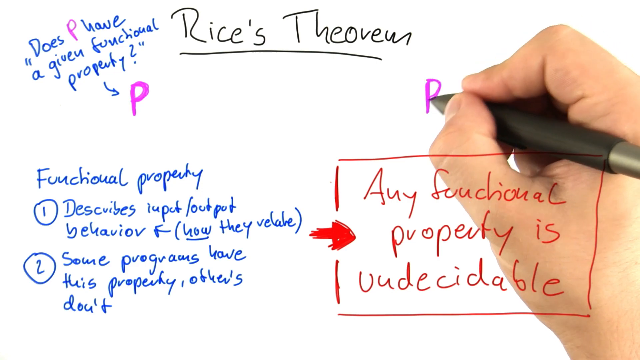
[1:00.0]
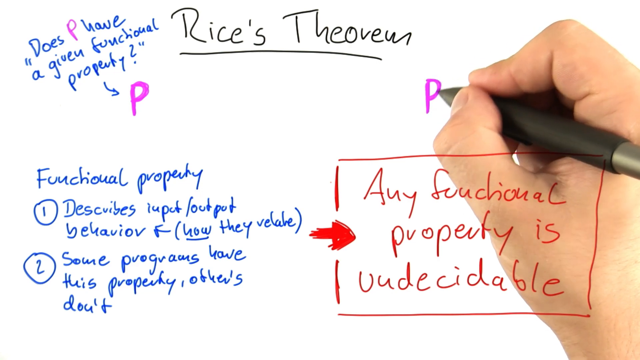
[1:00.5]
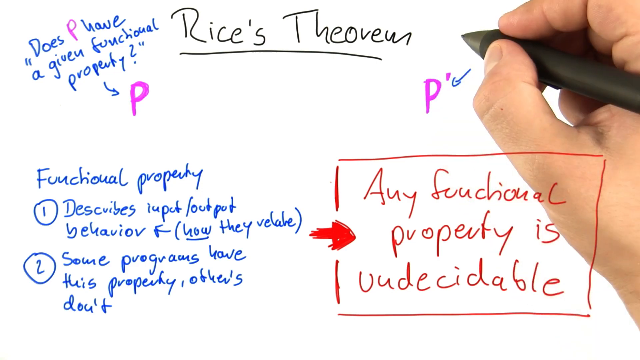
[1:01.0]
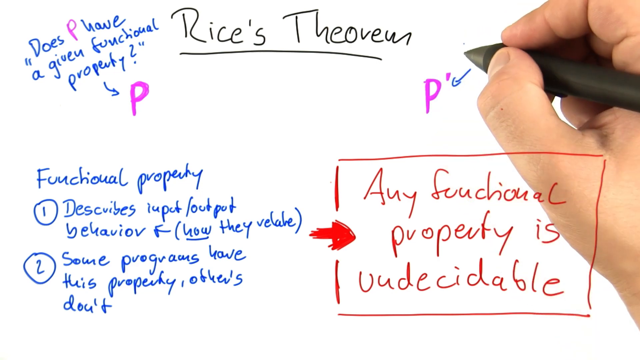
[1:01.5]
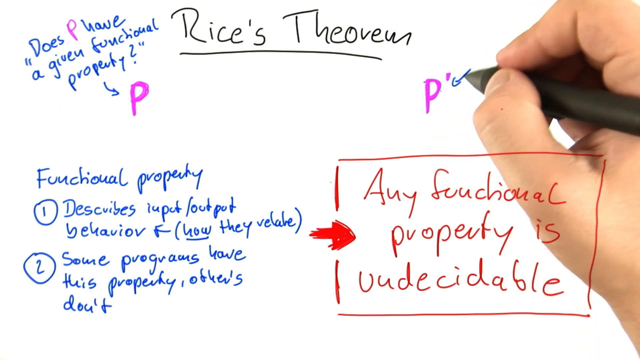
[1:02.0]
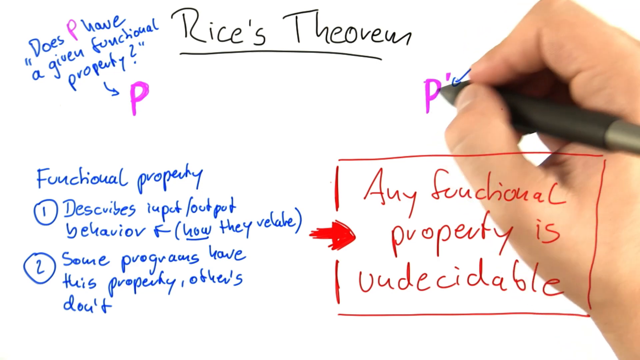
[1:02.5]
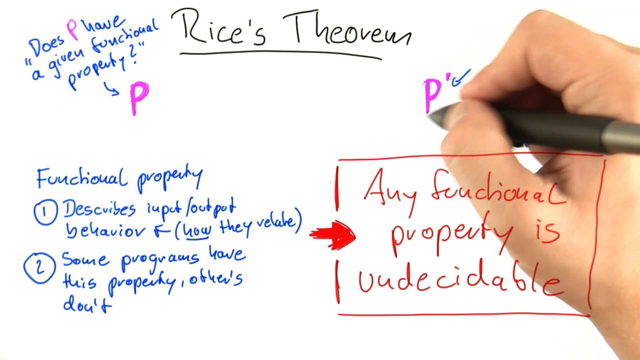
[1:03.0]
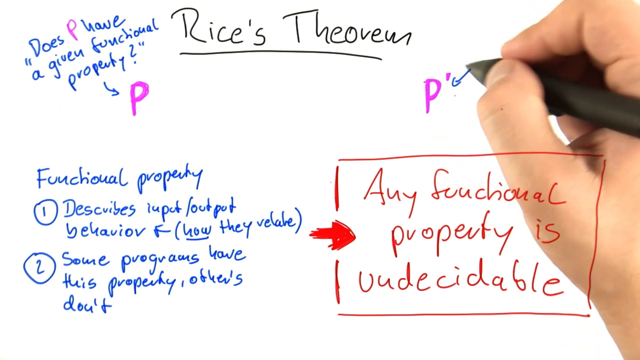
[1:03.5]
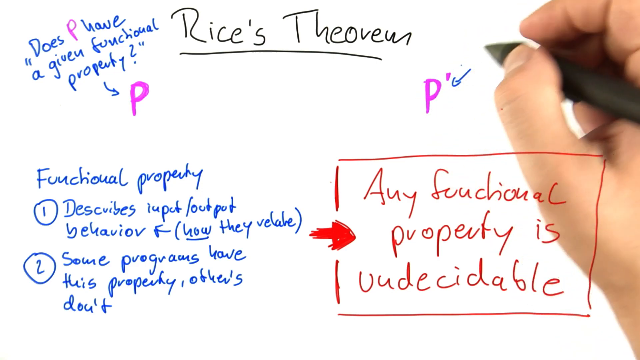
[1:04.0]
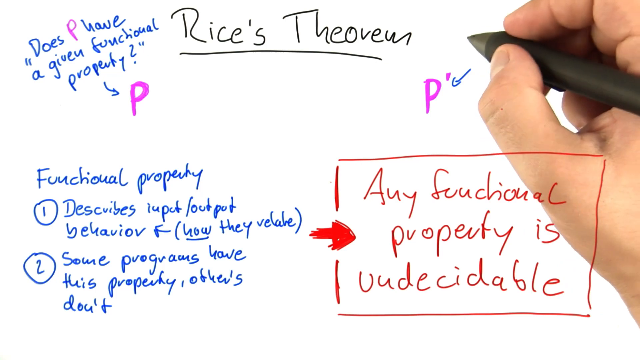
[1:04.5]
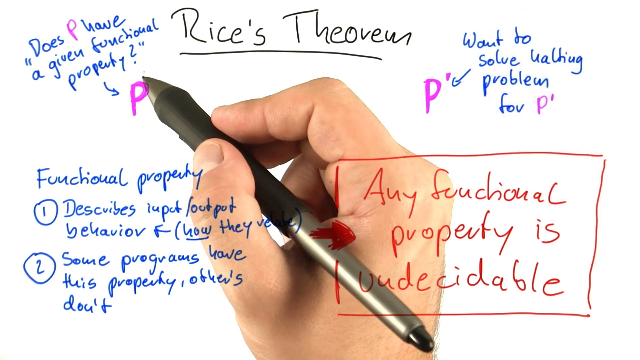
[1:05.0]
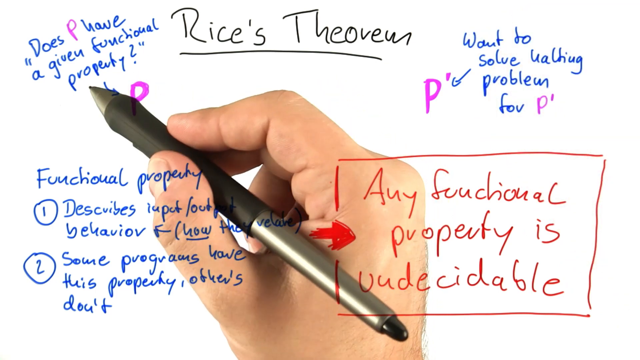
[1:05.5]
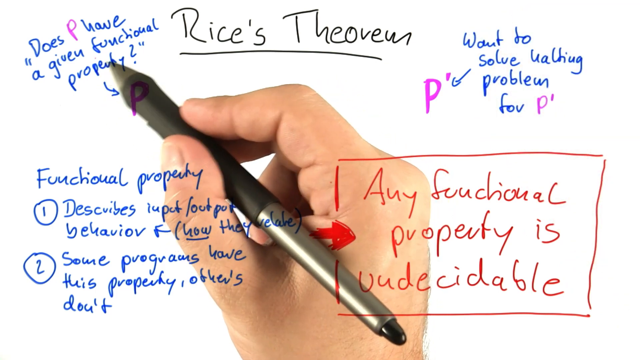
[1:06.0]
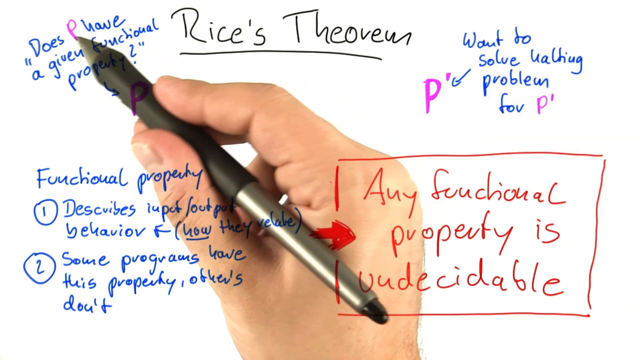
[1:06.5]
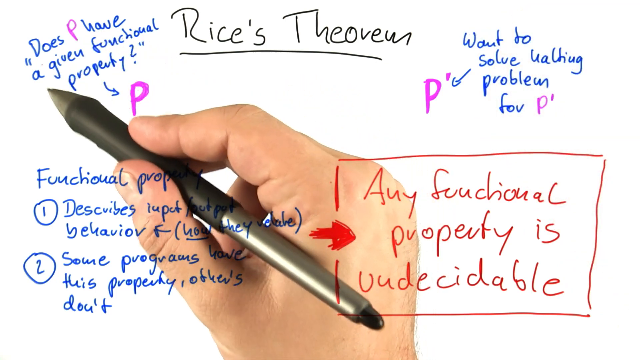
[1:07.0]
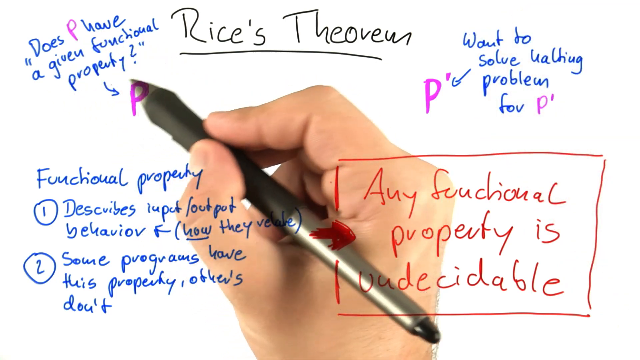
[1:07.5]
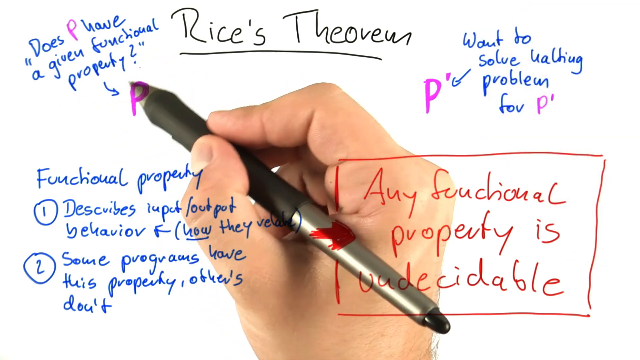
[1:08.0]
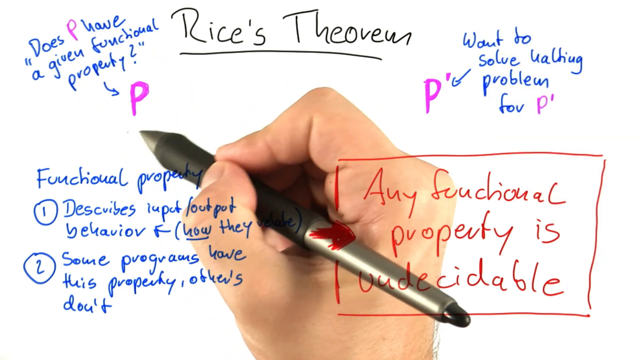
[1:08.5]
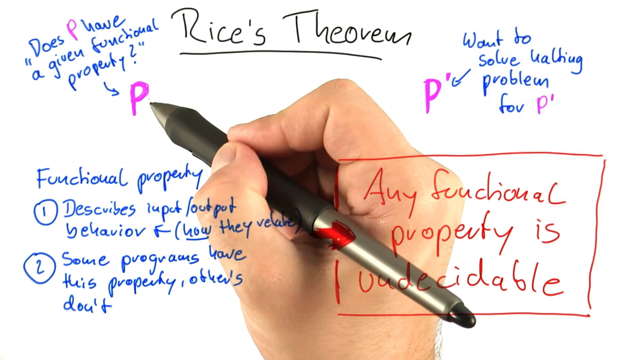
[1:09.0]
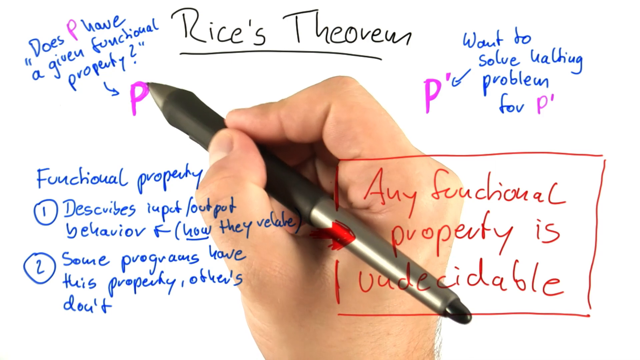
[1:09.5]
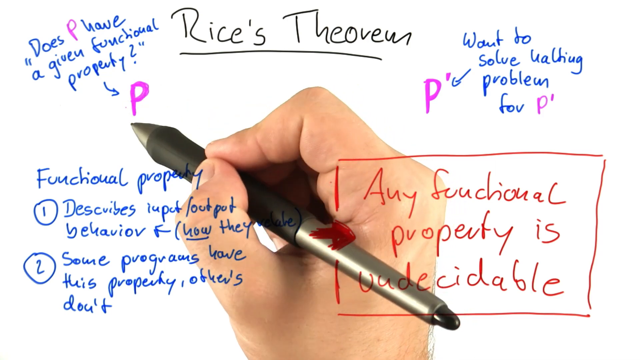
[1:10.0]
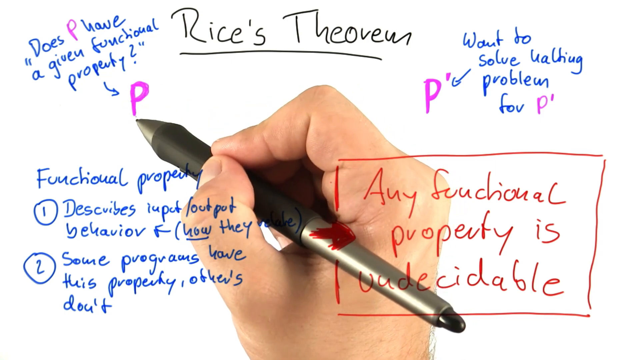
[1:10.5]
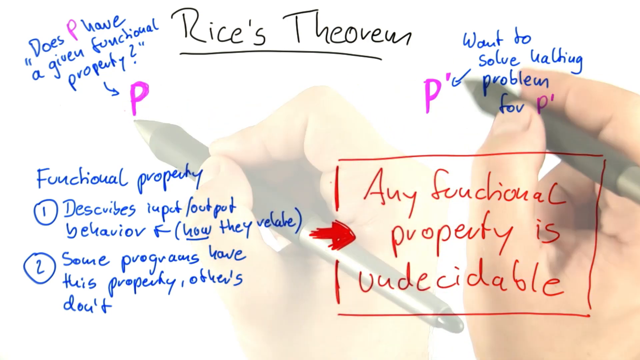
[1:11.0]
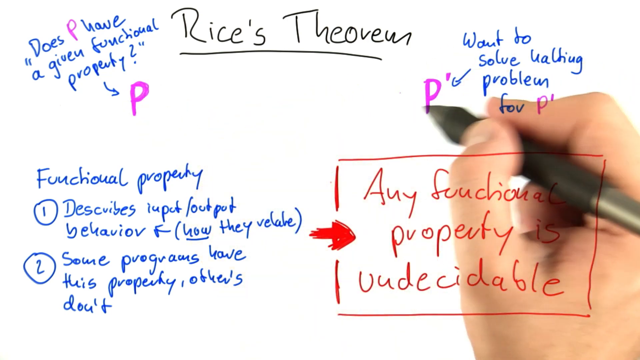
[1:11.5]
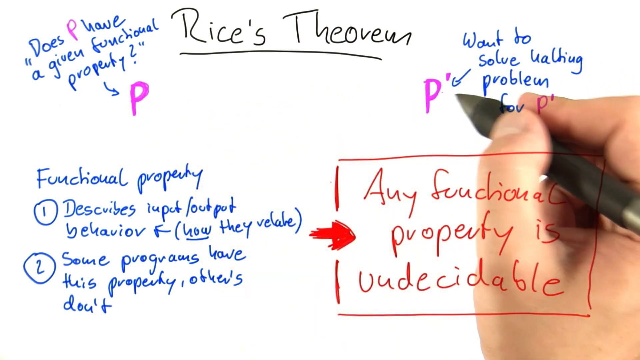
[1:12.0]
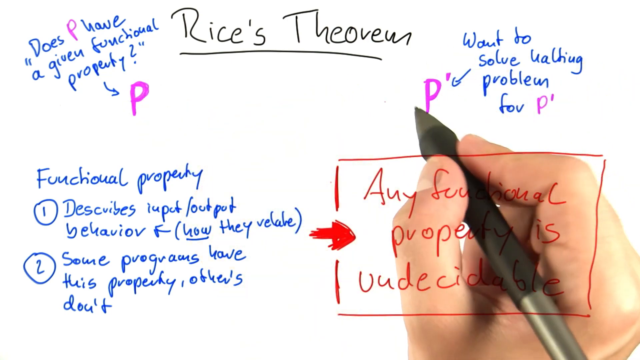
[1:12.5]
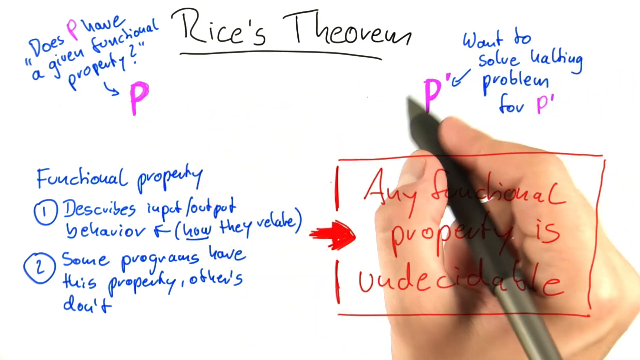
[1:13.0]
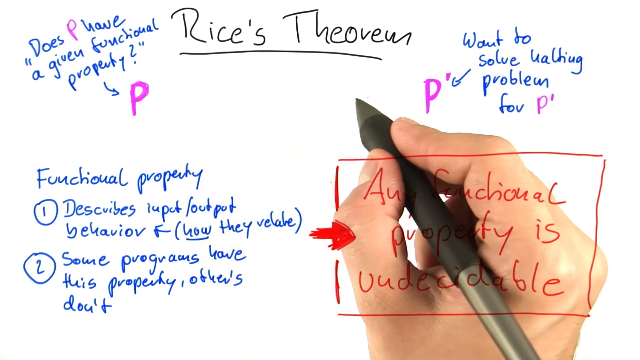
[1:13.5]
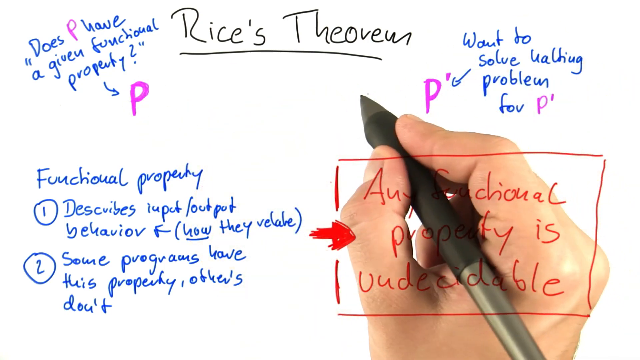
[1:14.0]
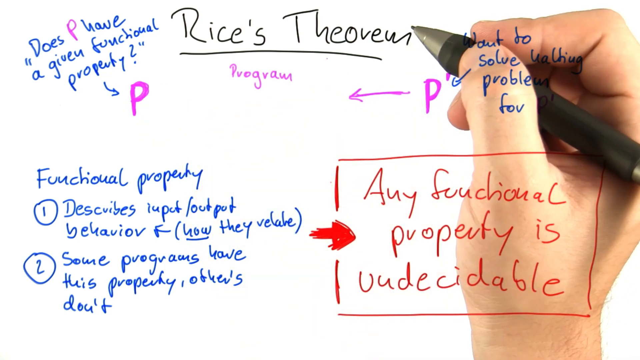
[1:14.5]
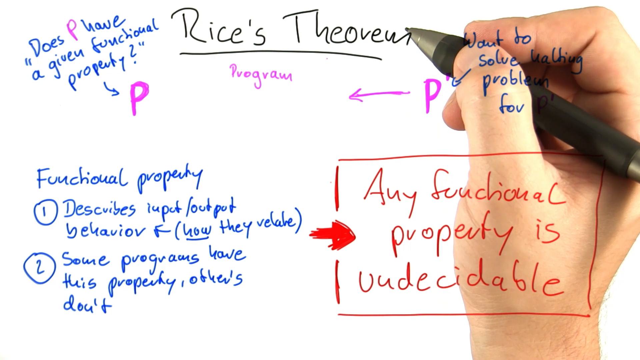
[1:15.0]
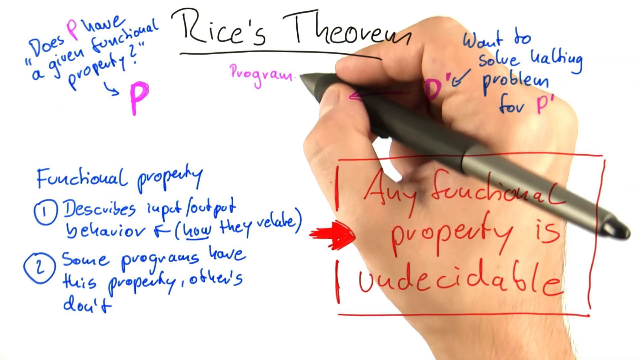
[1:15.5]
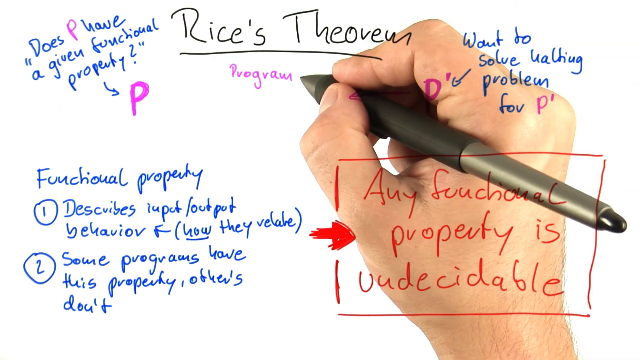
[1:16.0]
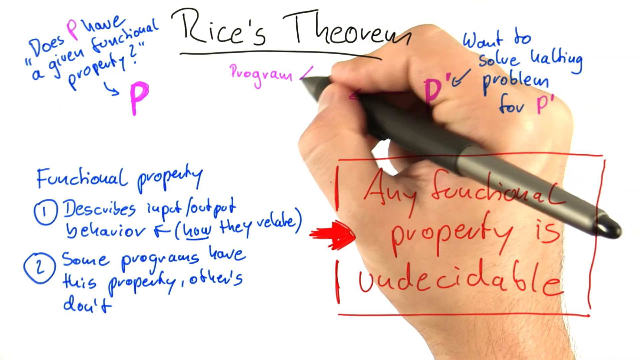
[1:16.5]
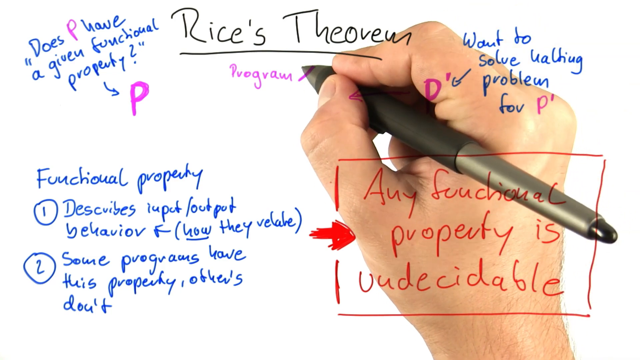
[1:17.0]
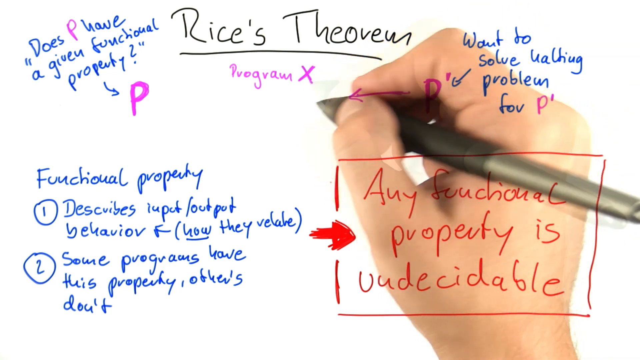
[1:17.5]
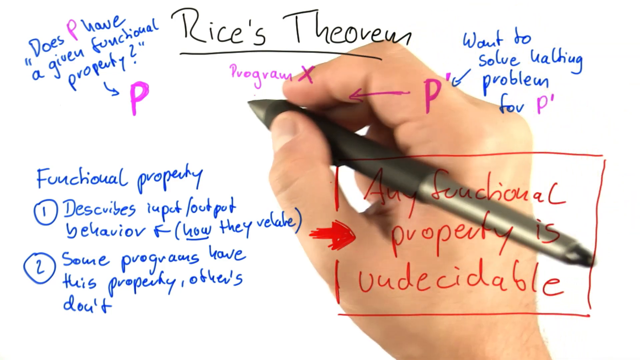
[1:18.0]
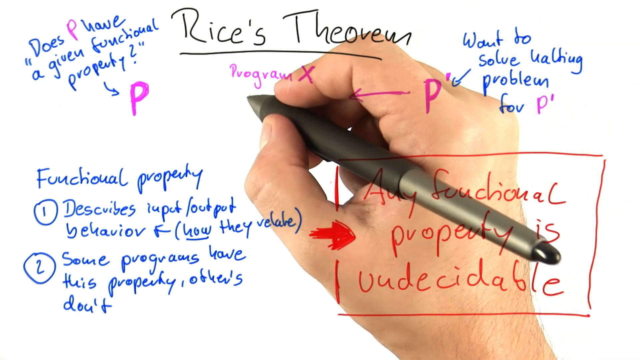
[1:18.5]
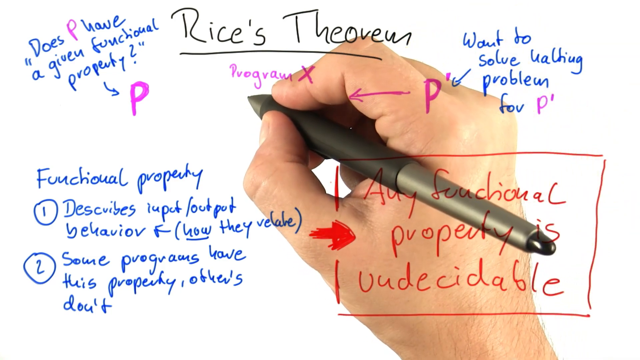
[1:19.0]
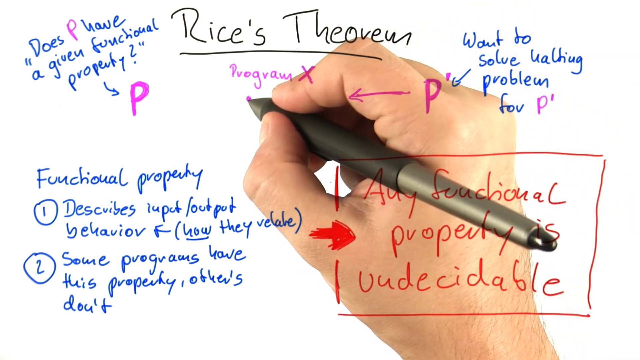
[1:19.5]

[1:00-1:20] Black text on a white background says "Rice's Theorem." Blue and purple text in quotation marks says "does P have a given functional property," and a small blue arrow points to a purple letter P. A person's hand with a pen draws a purple letter P. Blue text at the bottom left says "Functional Property 1 describes input-output behavior, how they relate," and "2 some programs have this property and others don't." A red box has a red arrow pointing to text that says "any functional property is undecidable." The person draws the P, which has a blue arrow pointing to it, then moves their hand over the P as if drawing without actually drawing. They write "want to solve waiting problem for P," point to the text in the top left corner, move their mouse around in a circle around the P, and do the same with the P on the right. They then draw a purple arrow to the left with purple text that says "Program," draw a purple X, and make a small purple dot.